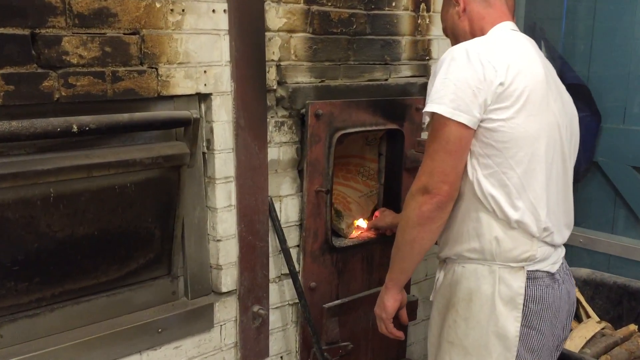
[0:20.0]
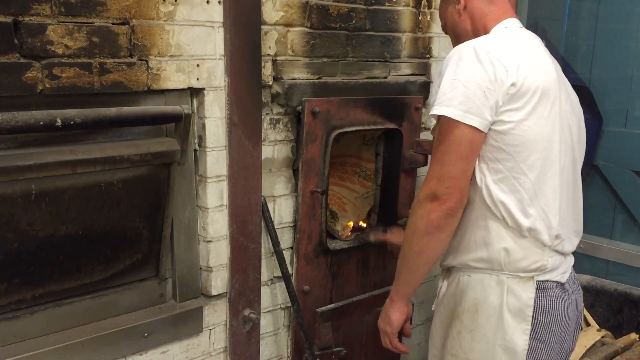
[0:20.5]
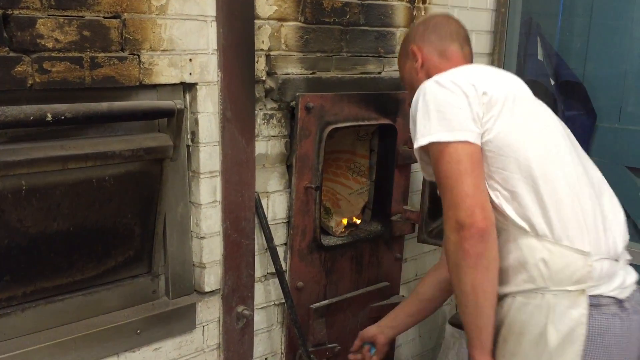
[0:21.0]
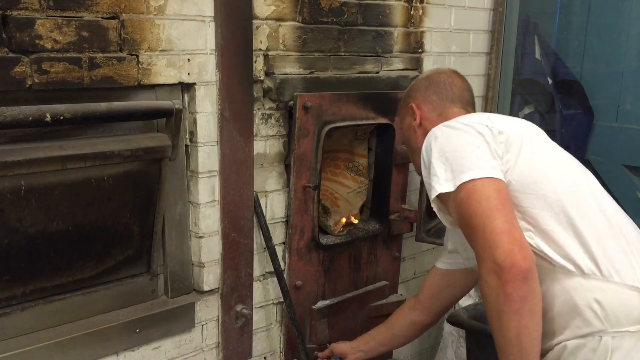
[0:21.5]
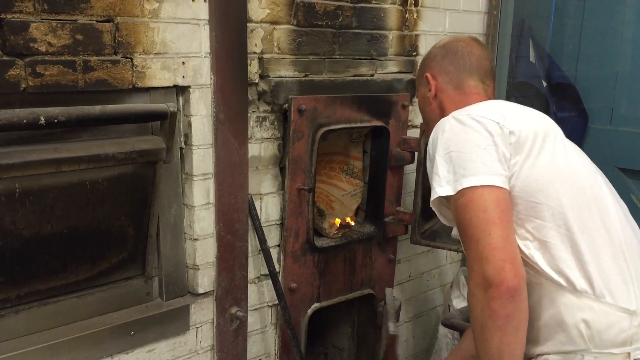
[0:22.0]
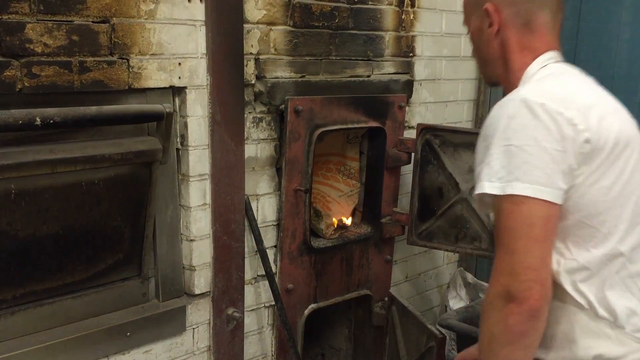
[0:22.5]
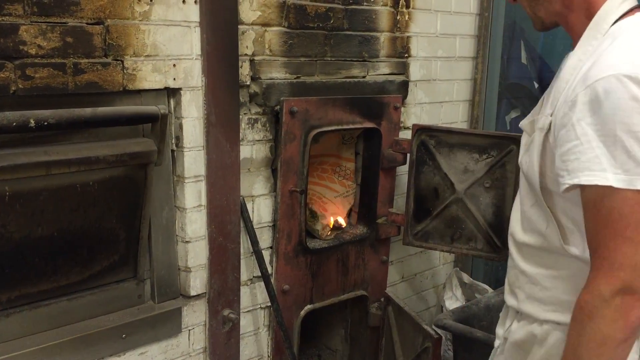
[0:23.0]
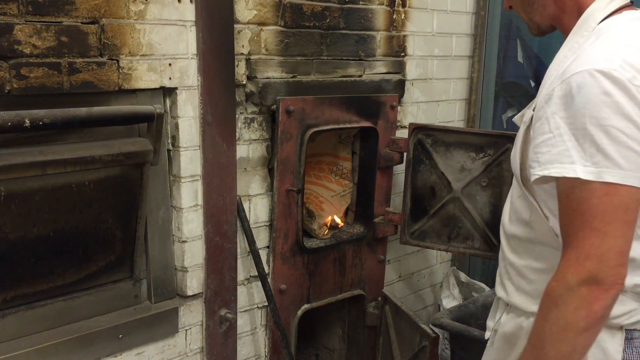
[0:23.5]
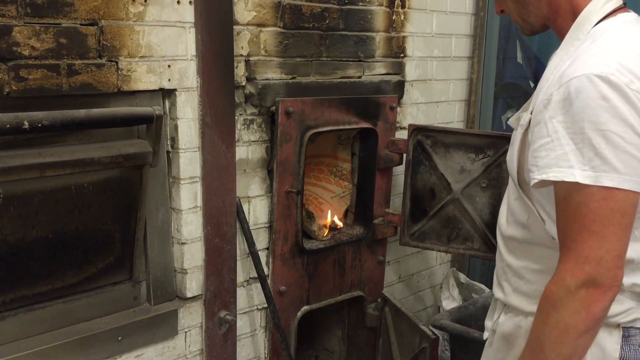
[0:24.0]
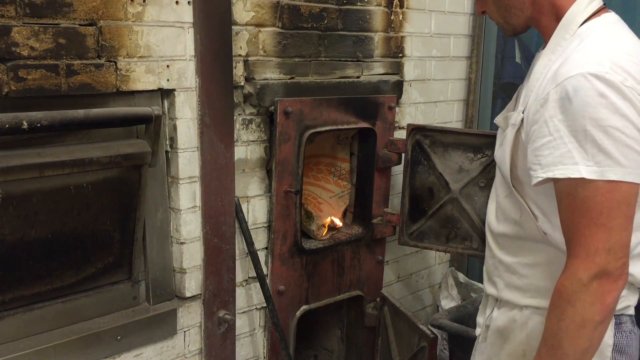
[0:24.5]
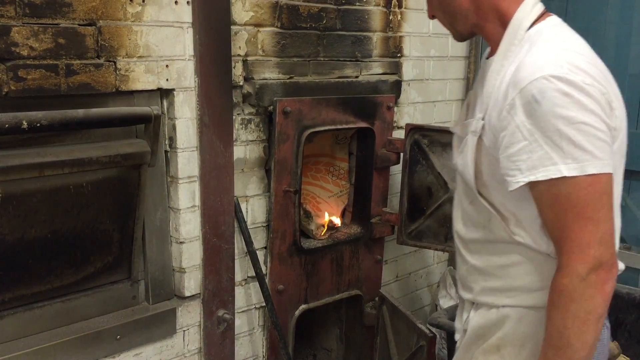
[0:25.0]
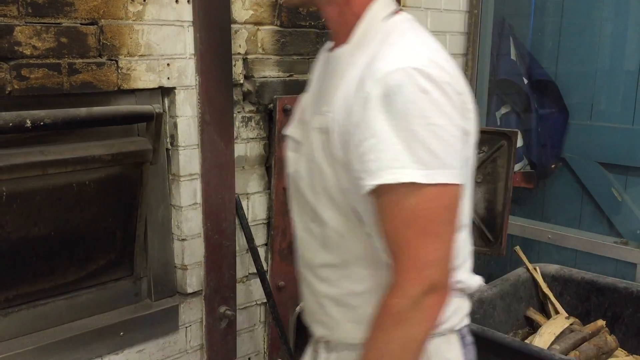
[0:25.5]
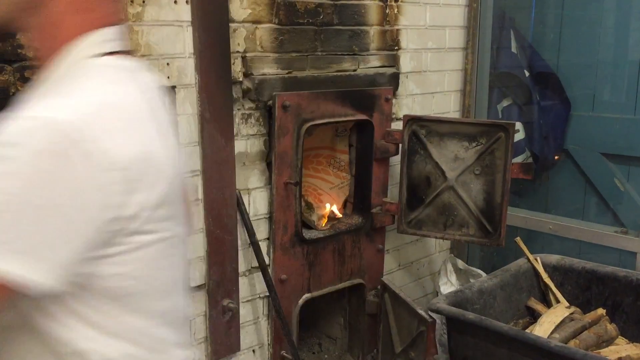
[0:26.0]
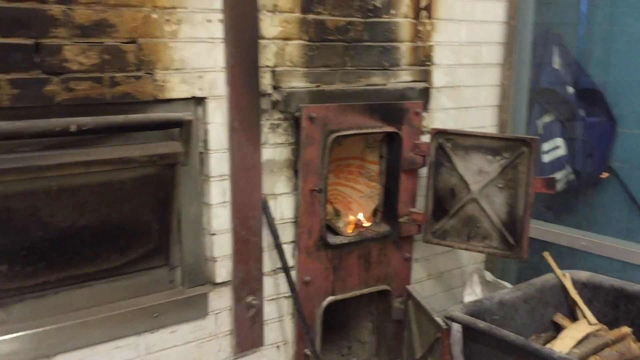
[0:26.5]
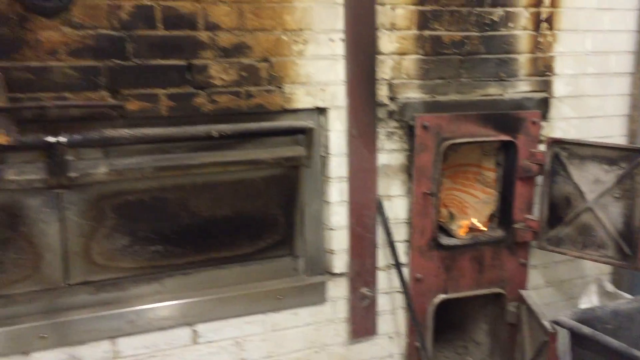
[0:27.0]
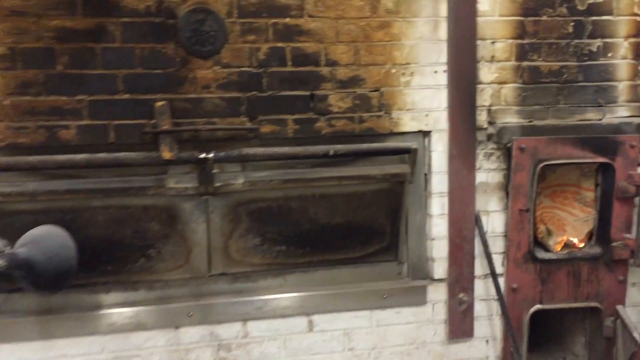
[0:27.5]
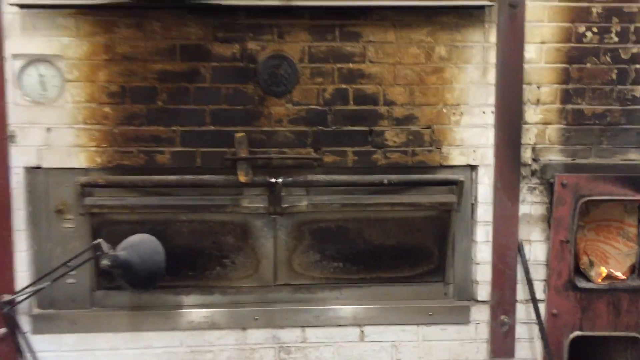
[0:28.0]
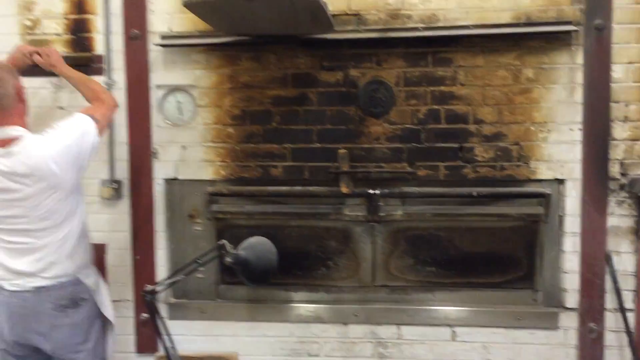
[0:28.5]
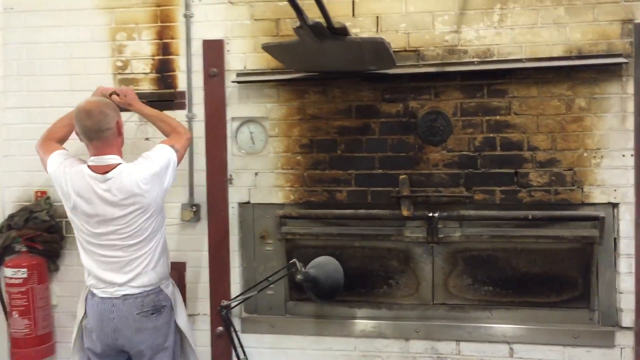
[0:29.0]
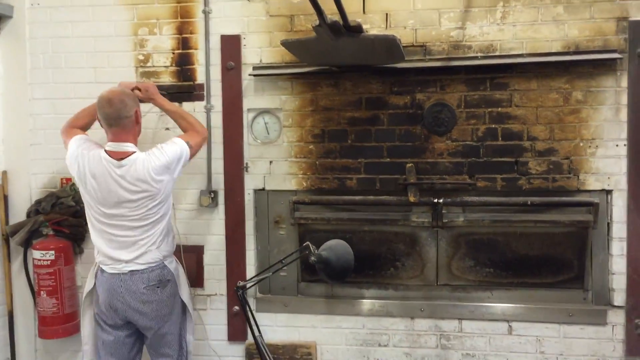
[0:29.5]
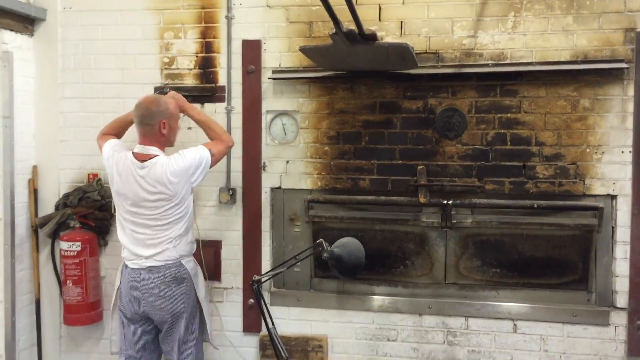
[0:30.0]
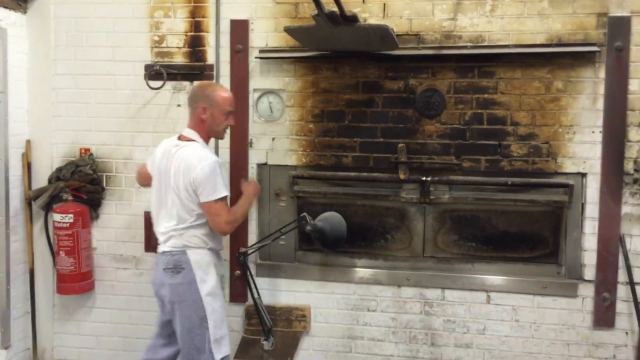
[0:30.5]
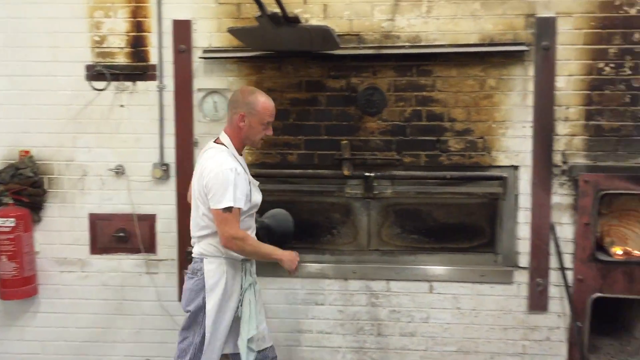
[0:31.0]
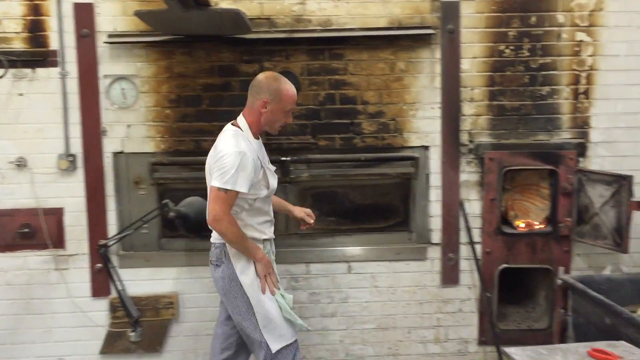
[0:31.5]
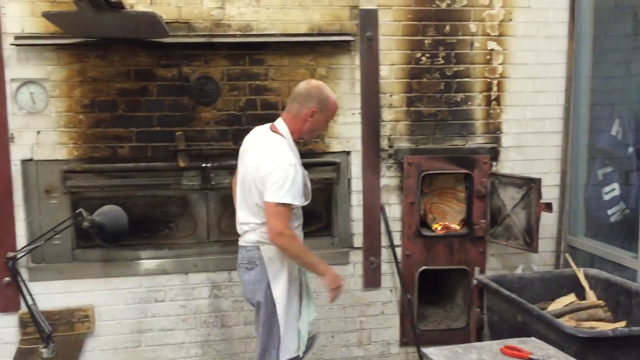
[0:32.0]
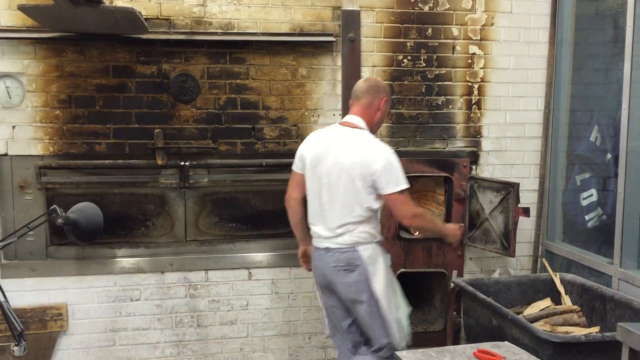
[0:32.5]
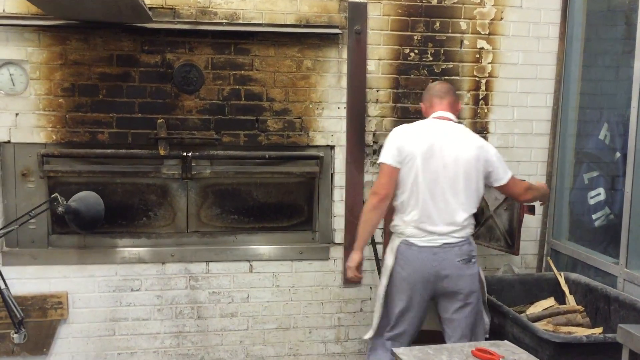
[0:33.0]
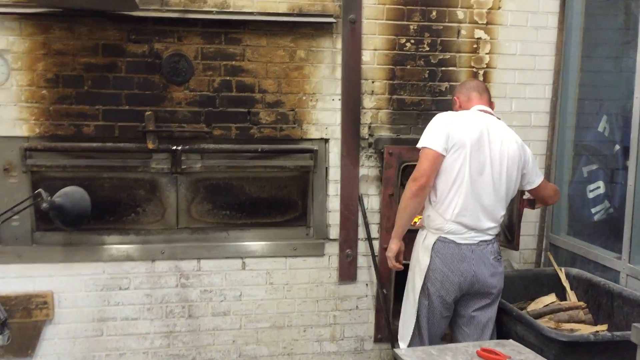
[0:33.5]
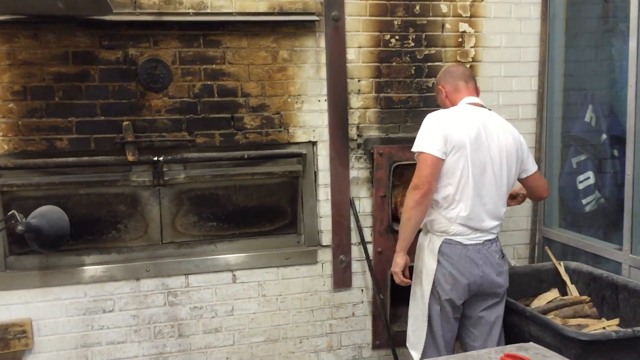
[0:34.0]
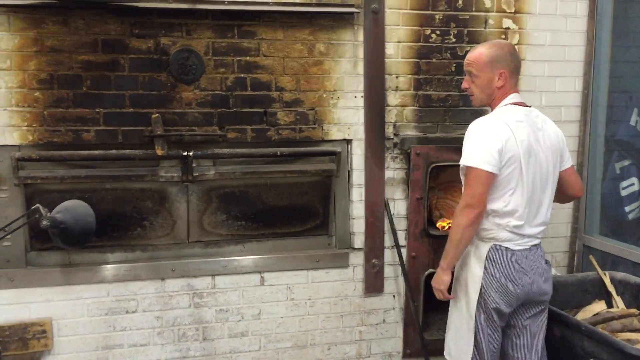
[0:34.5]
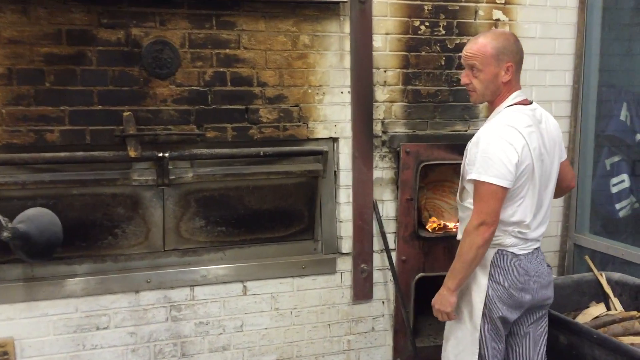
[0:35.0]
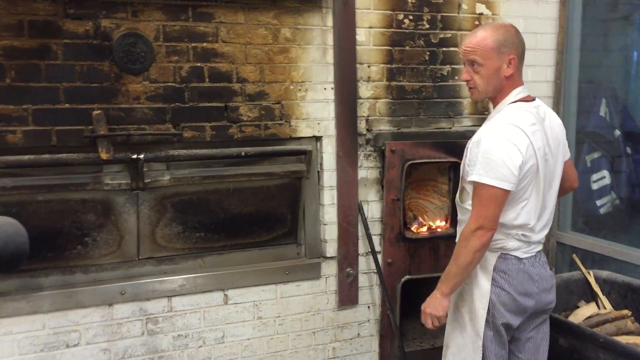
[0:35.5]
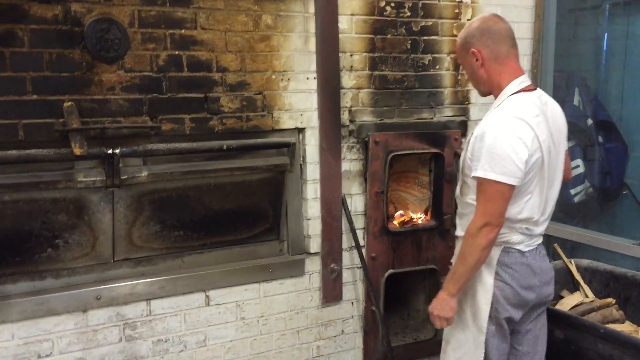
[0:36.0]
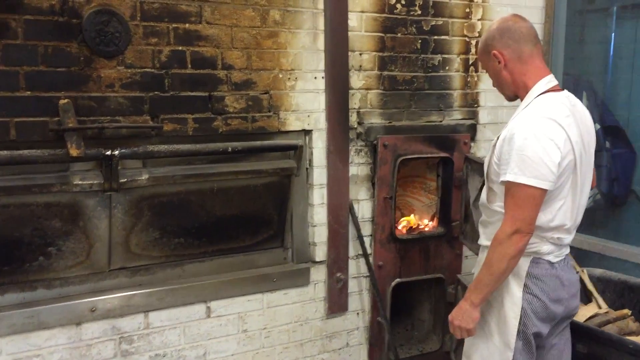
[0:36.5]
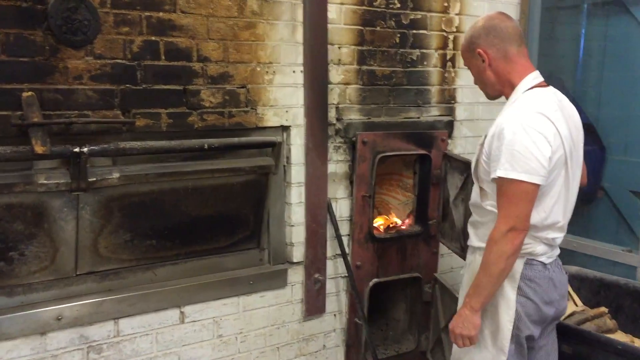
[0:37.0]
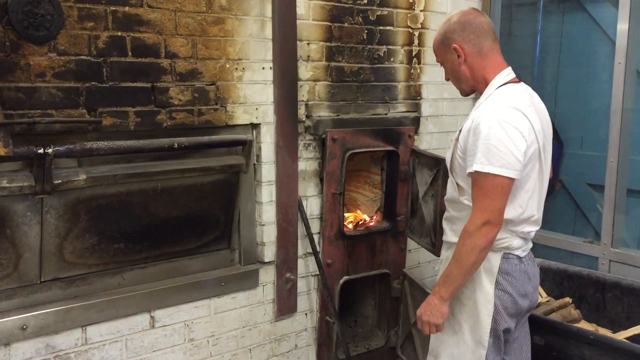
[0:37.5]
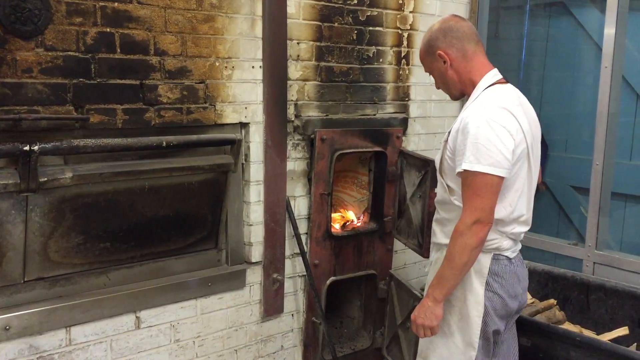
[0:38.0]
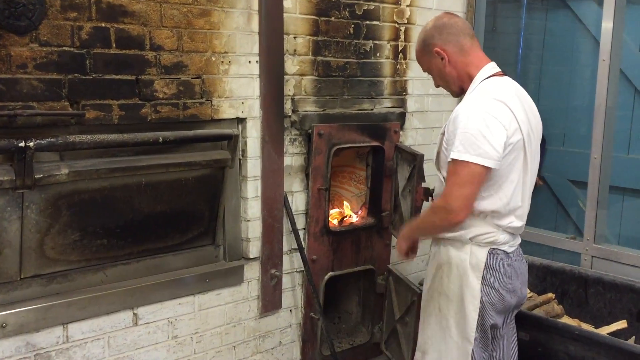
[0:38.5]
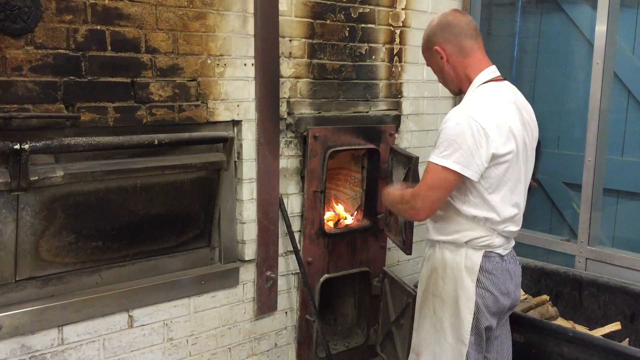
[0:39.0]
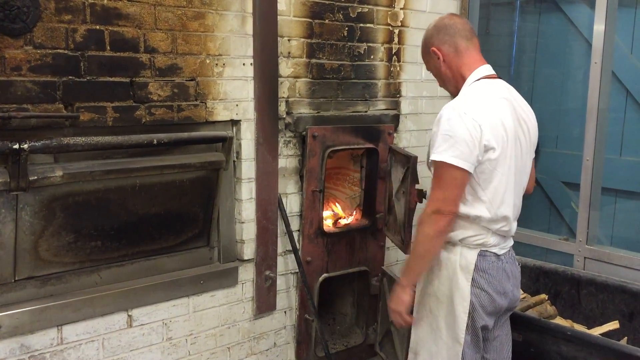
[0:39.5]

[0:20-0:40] A flame burns in the opening in the wall, with a charred area above it that is blackened with soot. To the left are what look to be oven doors, also blackened above. The man walks to the left of the ovens and appears to move a handle around on some sort of contraption above the ovens. He looks over at the ovens as he attends to the fire, and moves his hand in a circle as if to say to hurry up, seeming a little impatient. He appears to be starting the fire that feeds the oven. A fire extinguisher is in the room.